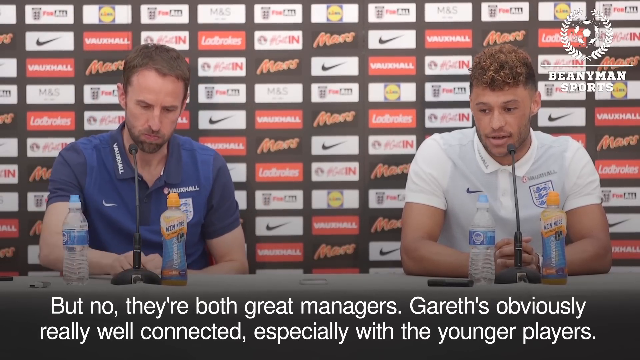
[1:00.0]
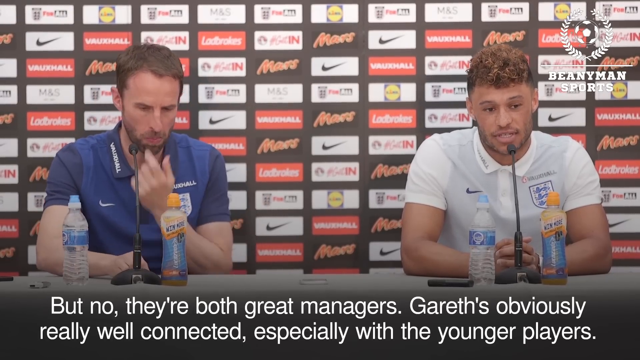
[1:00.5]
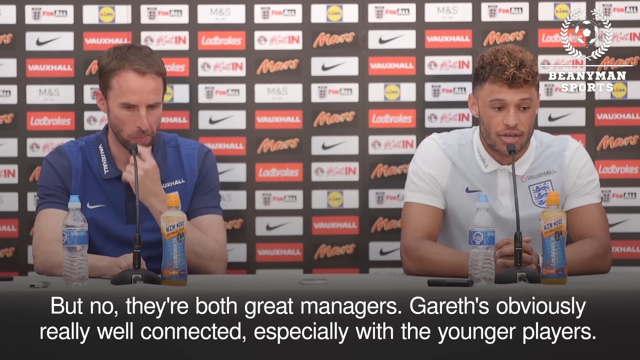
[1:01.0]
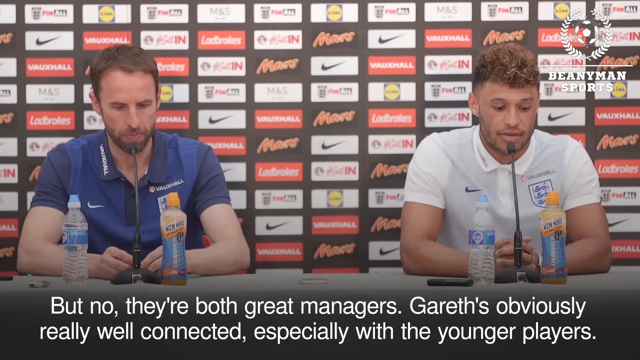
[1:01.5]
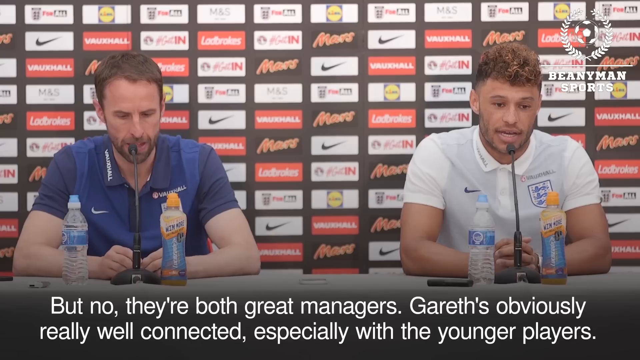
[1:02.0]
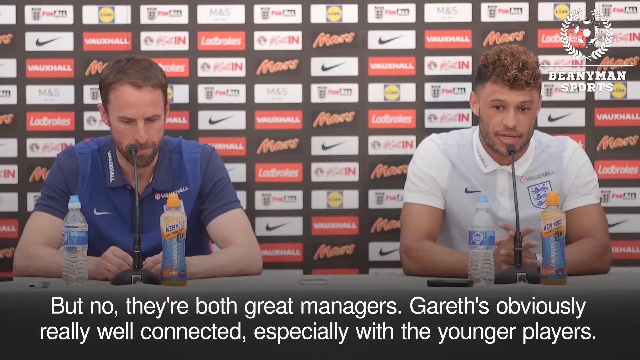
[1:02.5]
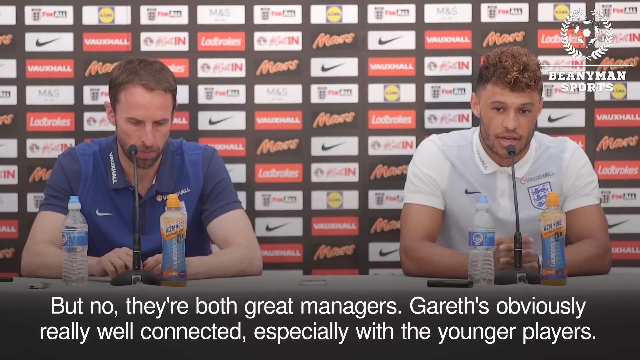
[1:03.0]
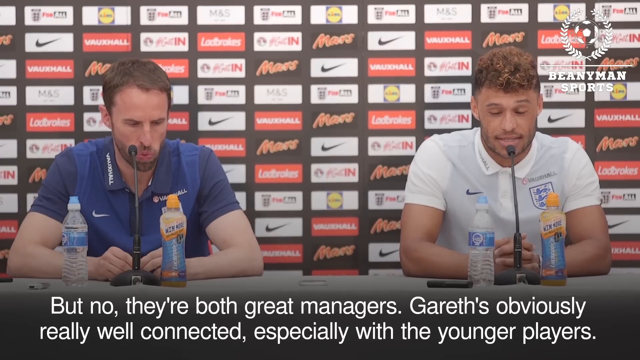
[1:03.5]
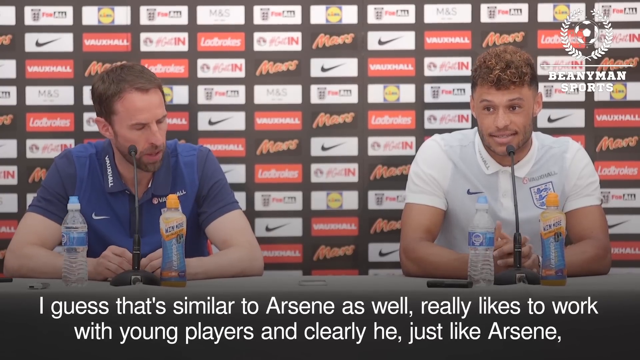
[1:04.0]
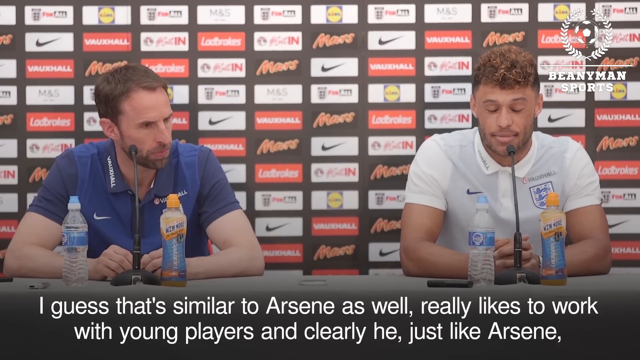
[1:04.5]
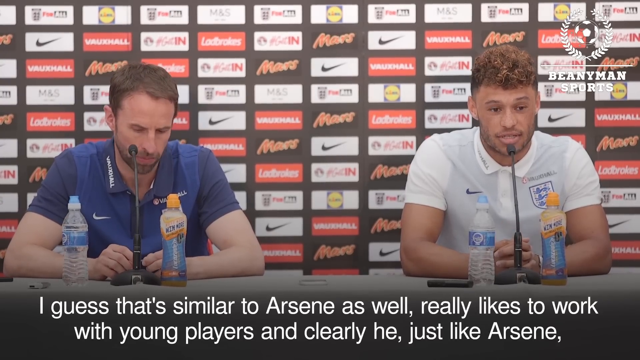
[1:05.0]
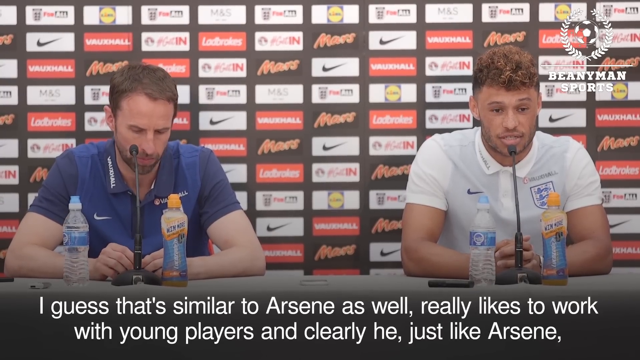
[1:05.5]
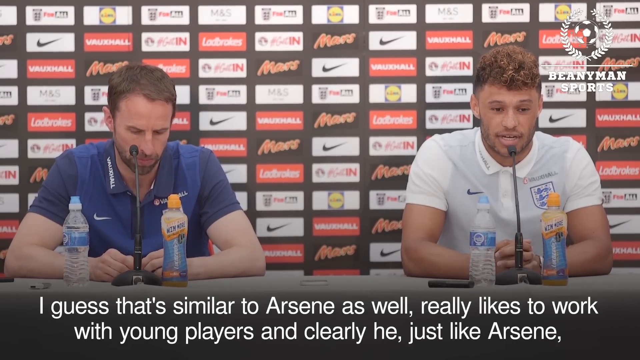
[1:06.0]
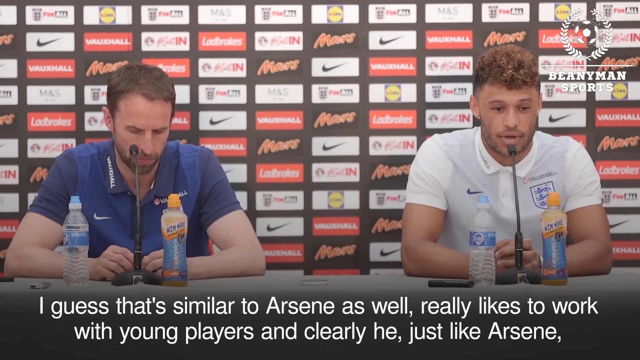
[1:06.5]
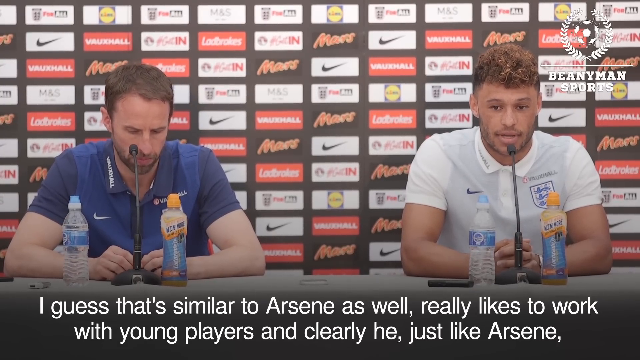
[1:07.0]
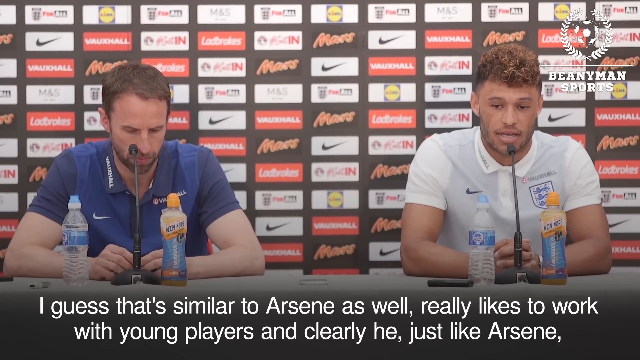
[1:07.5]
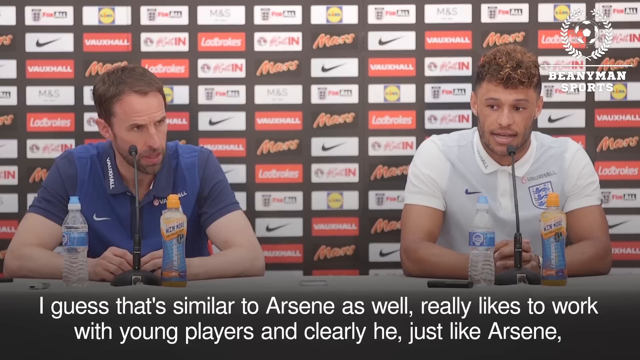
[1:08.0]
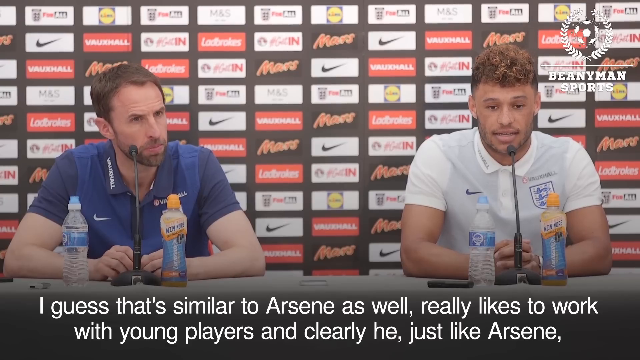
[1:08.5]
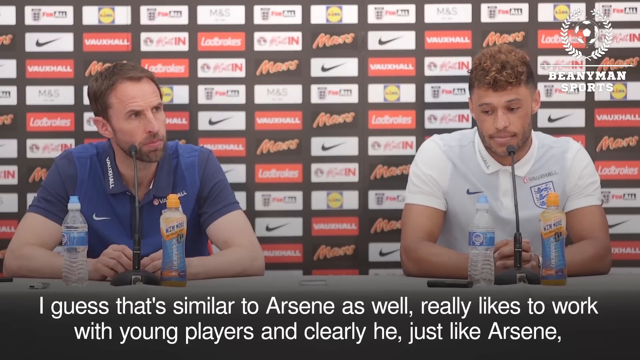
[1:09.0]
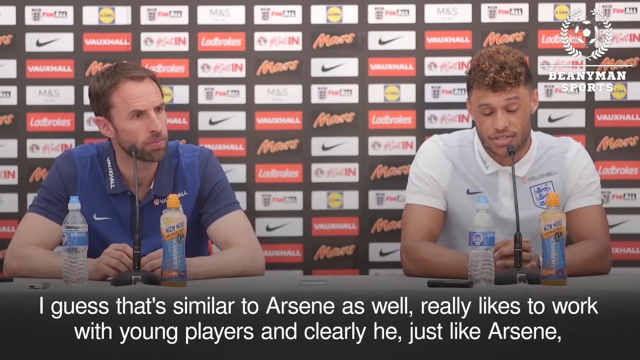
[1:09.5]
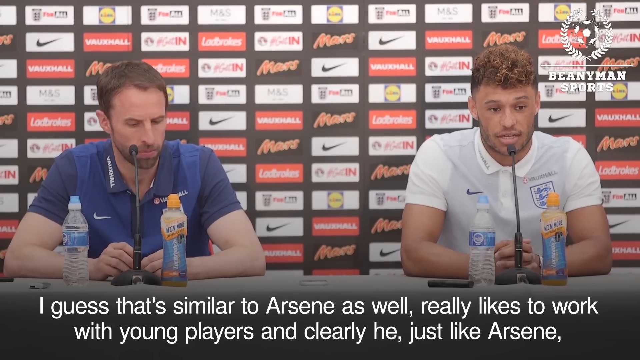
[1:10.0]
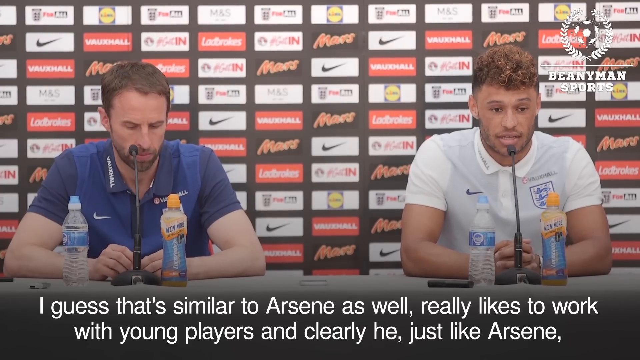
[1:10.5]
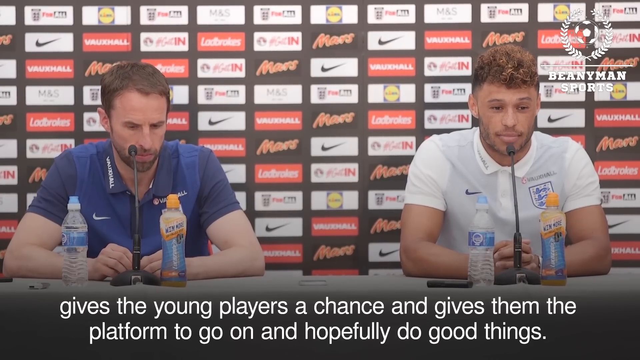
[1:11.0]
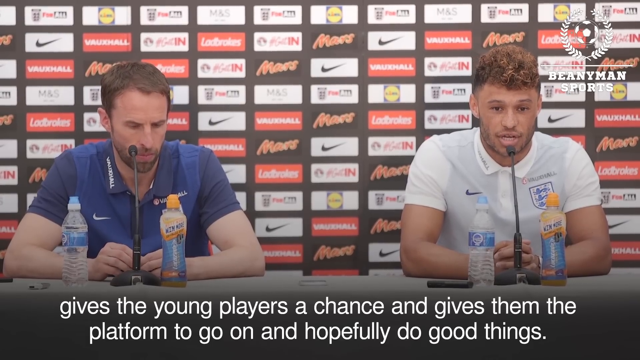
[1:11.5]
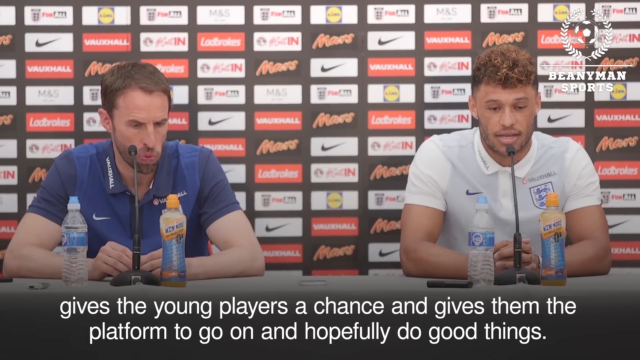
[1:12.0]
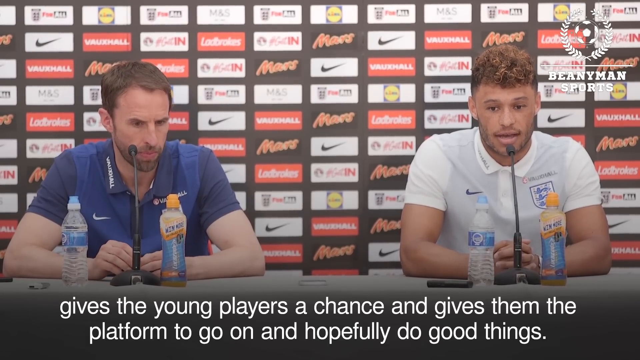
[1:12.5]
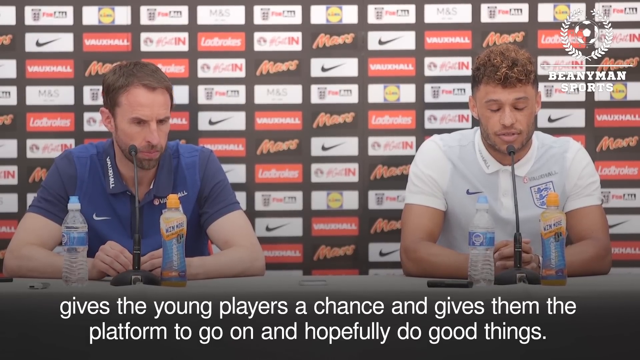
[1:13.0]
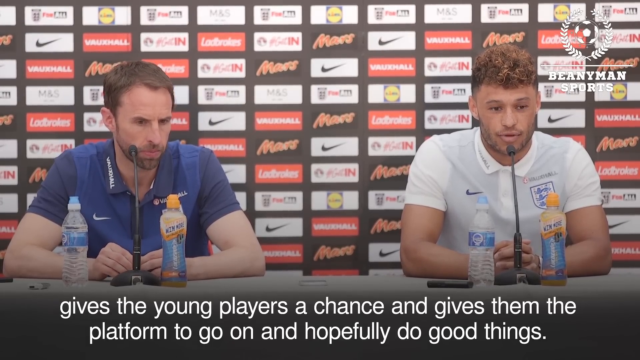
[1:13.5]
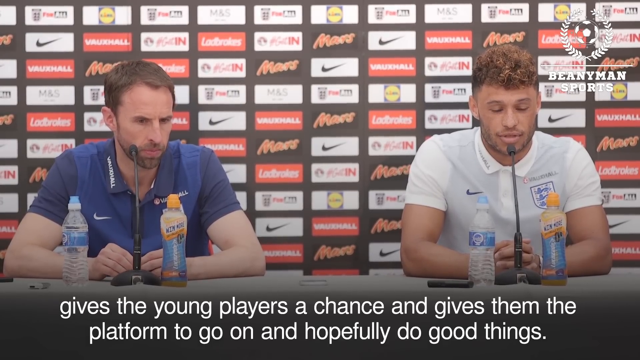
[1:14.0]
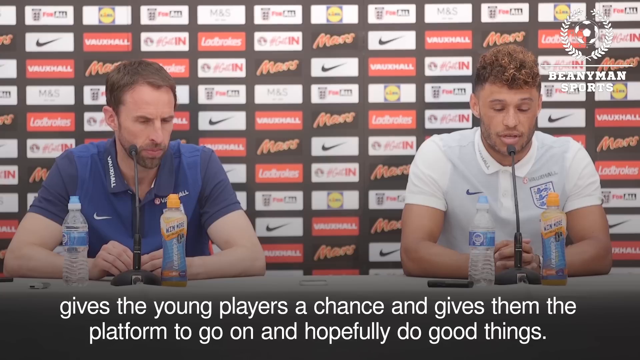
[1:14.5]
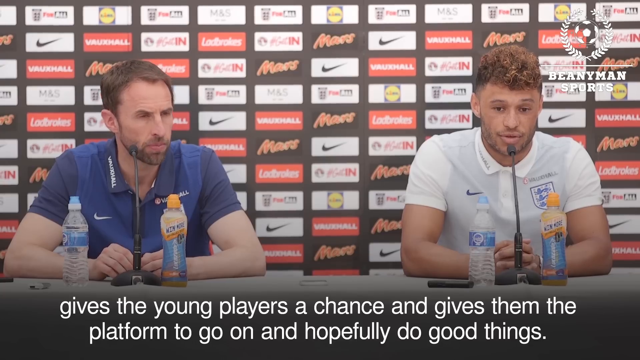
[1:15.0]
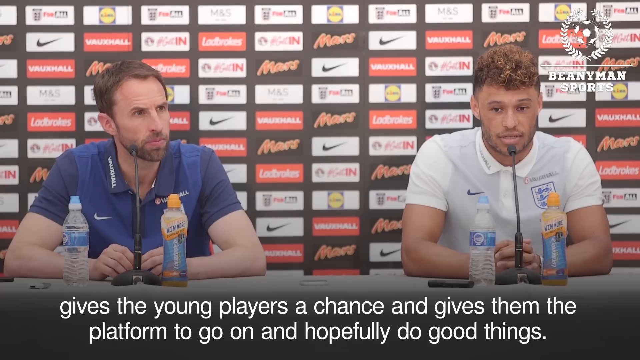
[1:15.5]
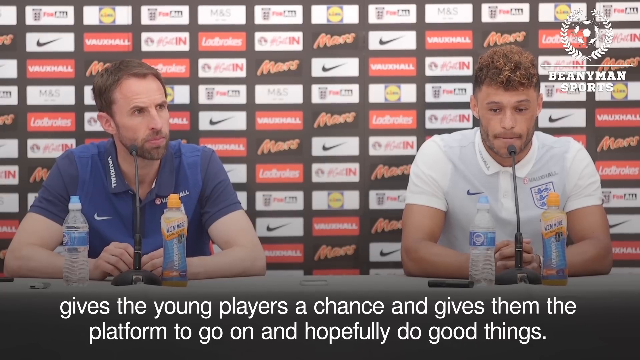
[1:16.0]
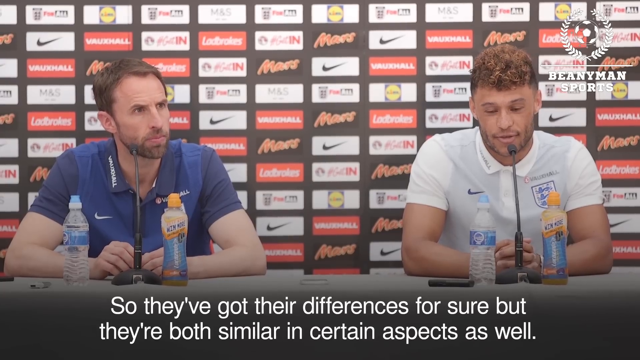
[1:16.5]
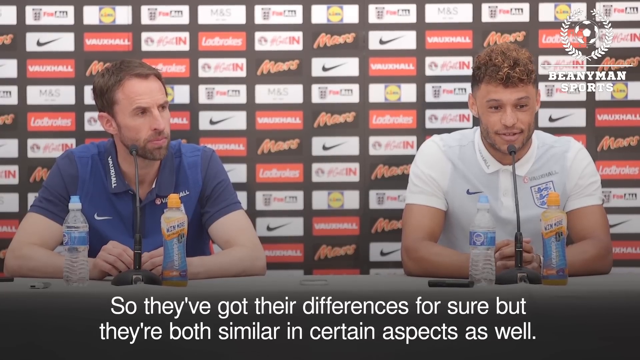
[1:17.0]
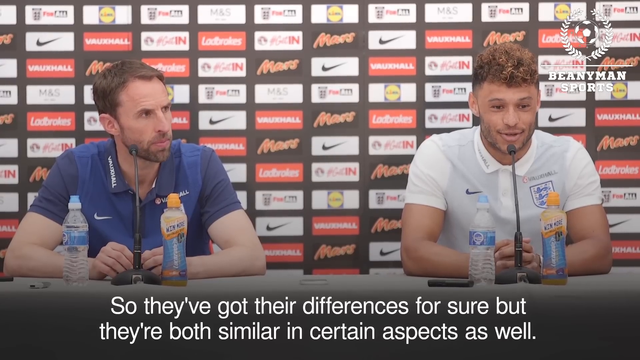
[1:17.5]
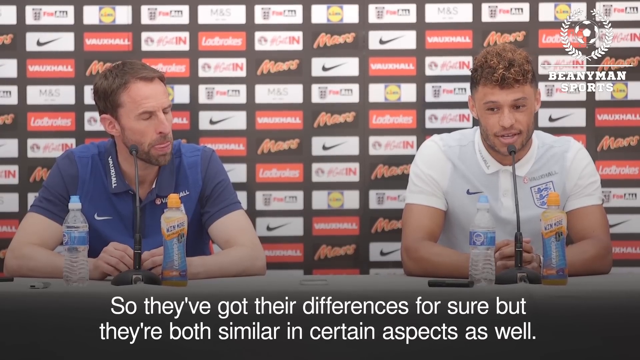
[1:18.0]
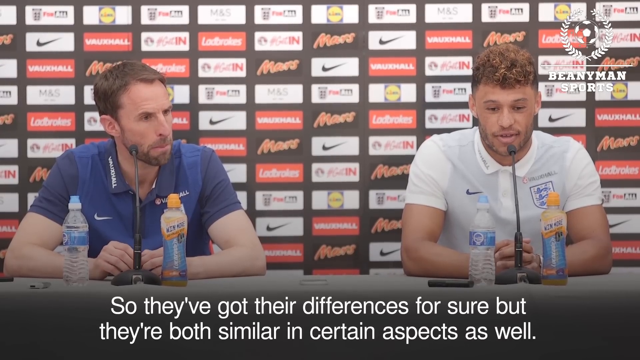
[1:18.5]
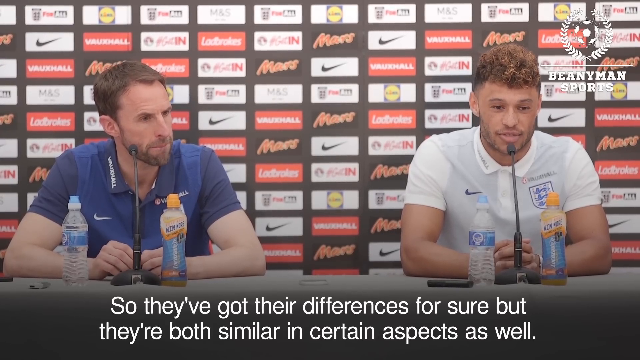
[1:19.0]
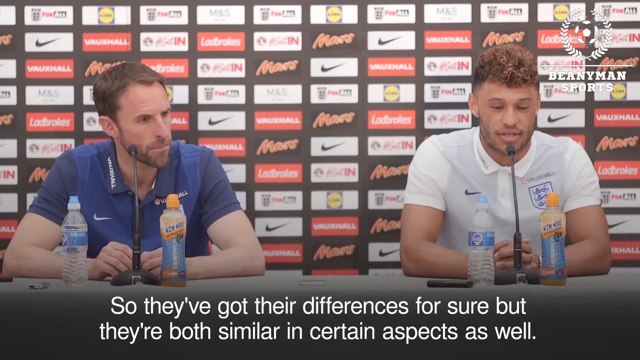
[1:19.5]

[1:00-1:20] The Beany Man Sports press conference shows a soccer player from England on the right side of the screen wearing a white team shirt with a team logo on the left side and a Nike emblem on the right. Sitting next to him on the left side of the screen is his manager, wearing the same type of shirt in blue. The manager appears to be probably mid-30s, and the player looks to be maybe mid-20s. Reporters ask them questions. The reporter asks, "How does he compare to Arsene as a manager?" Arsene is the manager on the left in the blue shirt. Both men start laughing. Ox, the player, answers: "they're both great managers. Gareth obviously, really well-connected. If you want to talk to me about Gareth, I'm more than happy to speak about him." He continues: "Obviously, they're different managers. Gareth's is a lot younger. That's something that's the most obvious difference. But no, they're both great managers. Gareth's obviously really well connected, especially with the younger players. I guess that's similar to Arsene as well, really likes to work with young players and clearly he, just like Arsene, gives the young players a chance and gives them the platform to go on and hopefully do good things. So they've got their differences for sure, but they're both similar in certain aspects as well."